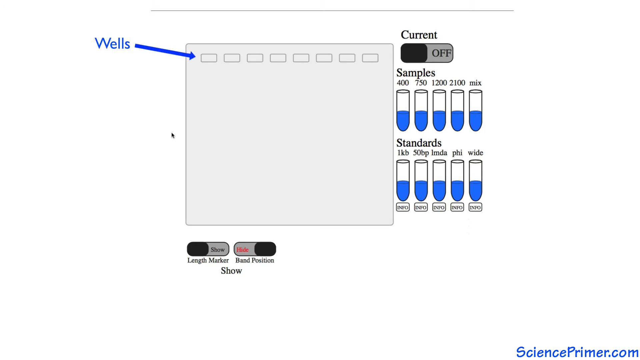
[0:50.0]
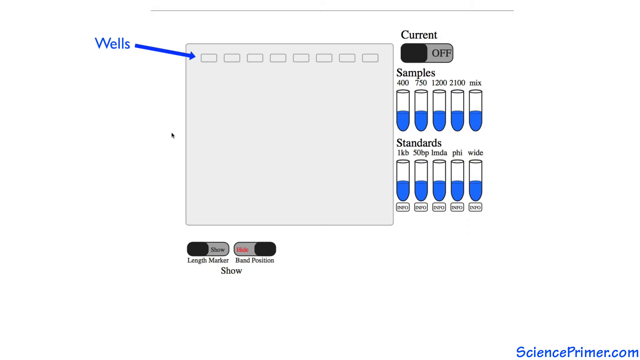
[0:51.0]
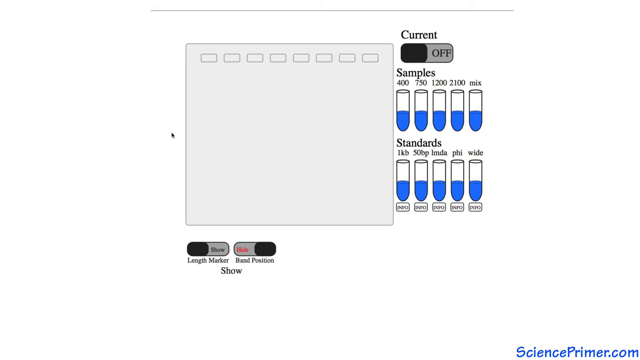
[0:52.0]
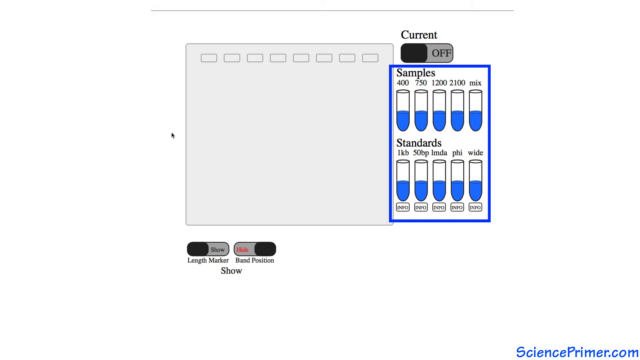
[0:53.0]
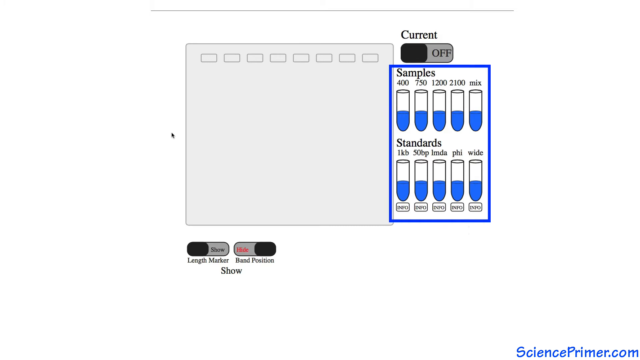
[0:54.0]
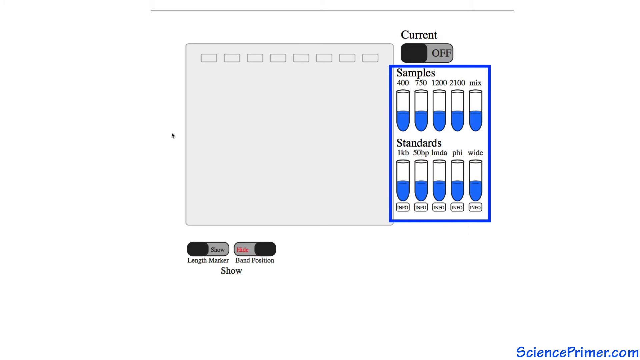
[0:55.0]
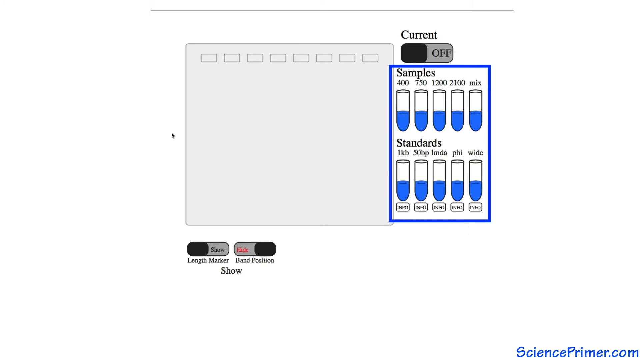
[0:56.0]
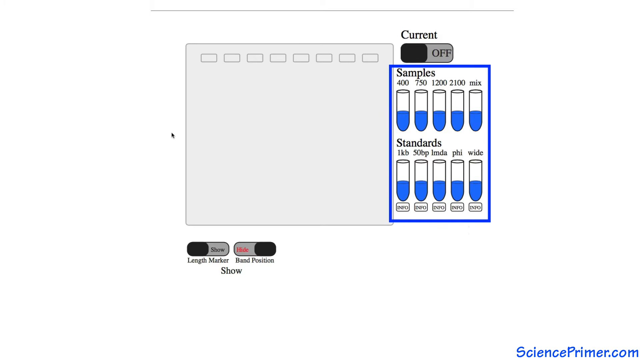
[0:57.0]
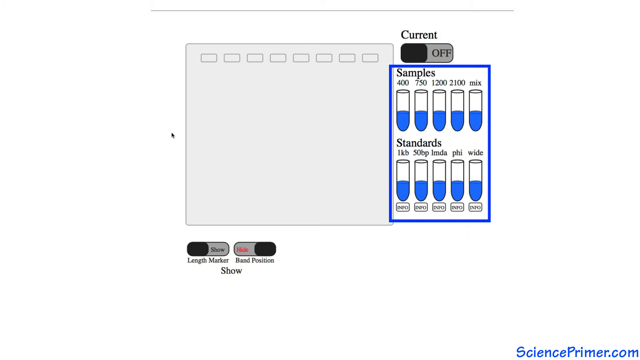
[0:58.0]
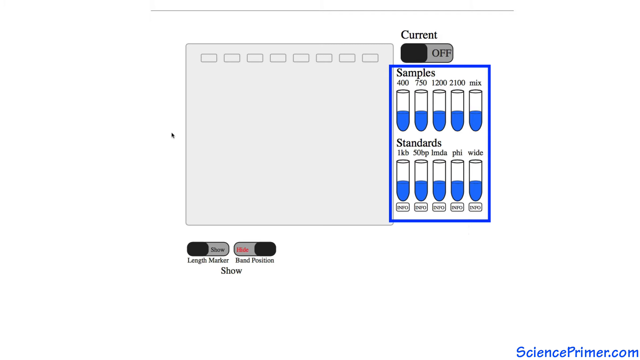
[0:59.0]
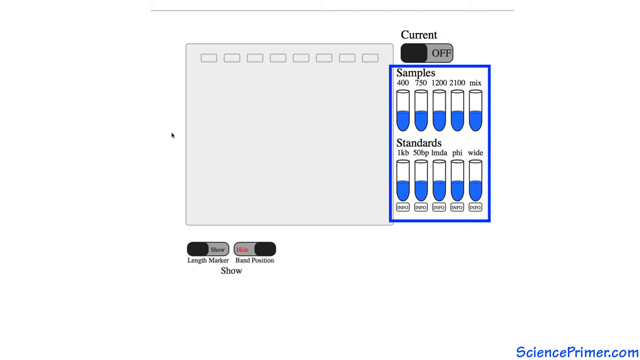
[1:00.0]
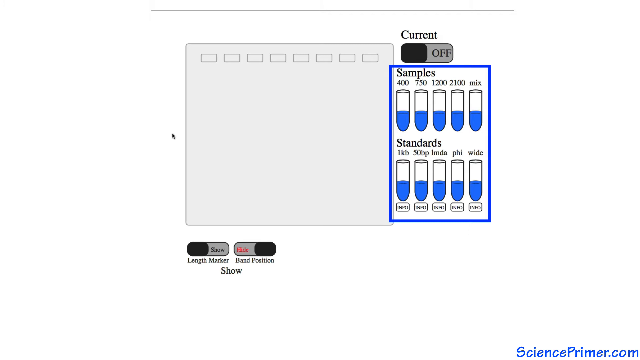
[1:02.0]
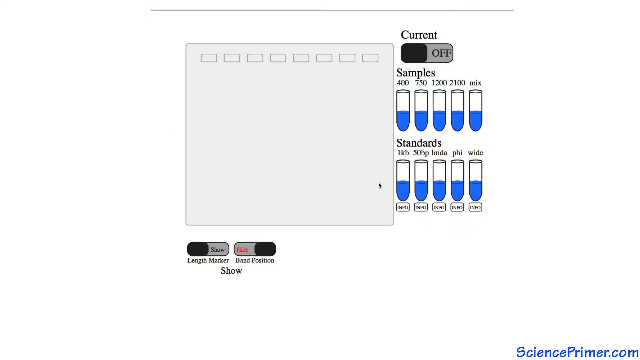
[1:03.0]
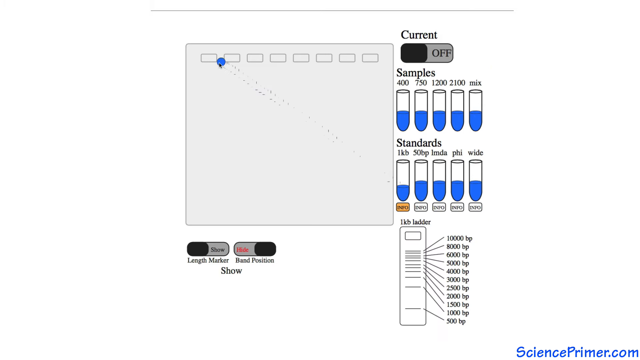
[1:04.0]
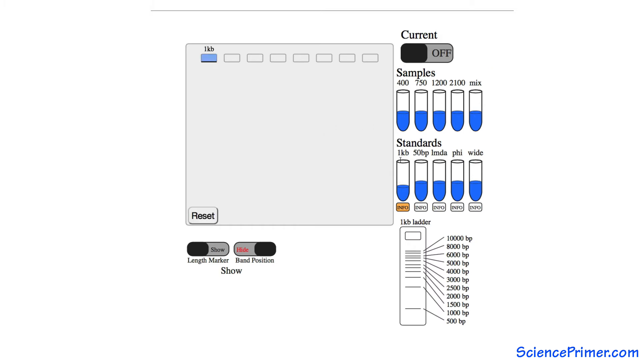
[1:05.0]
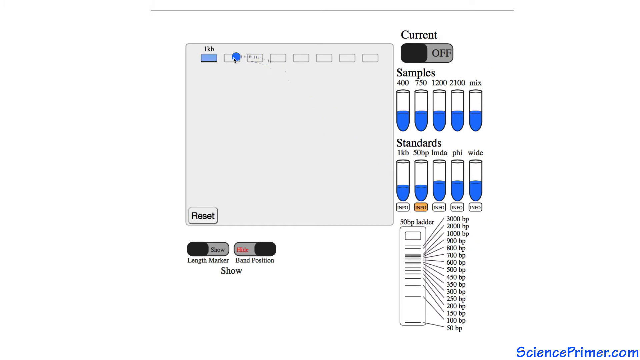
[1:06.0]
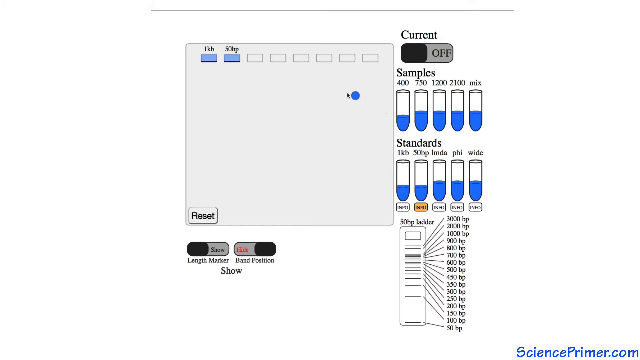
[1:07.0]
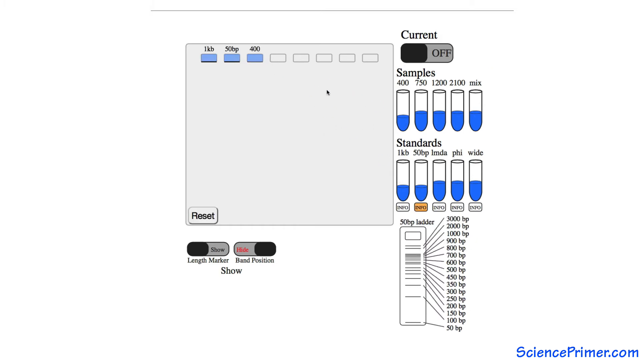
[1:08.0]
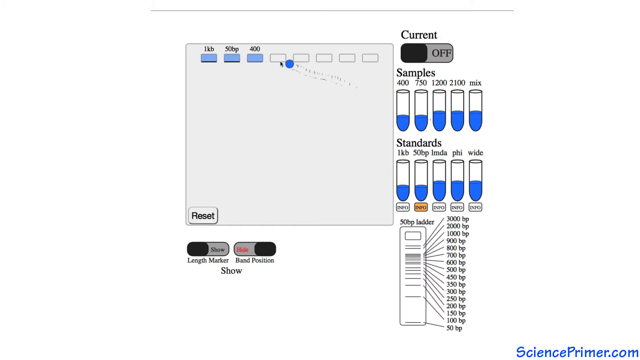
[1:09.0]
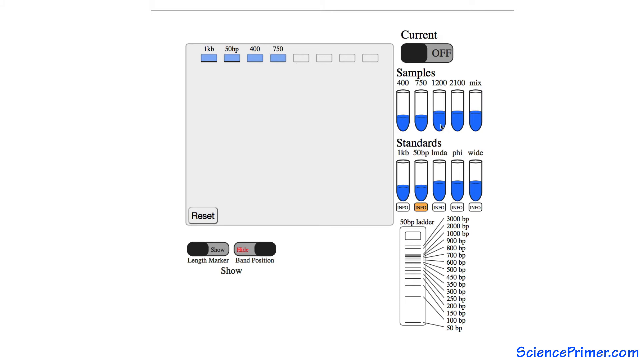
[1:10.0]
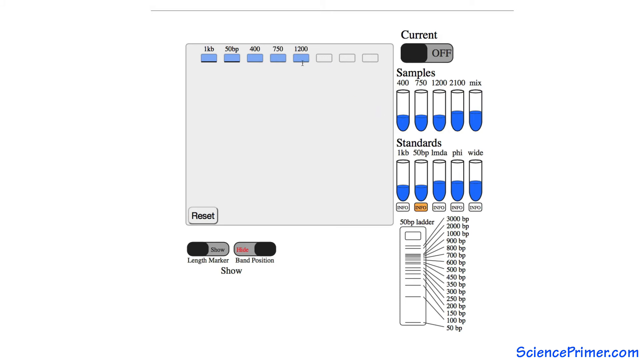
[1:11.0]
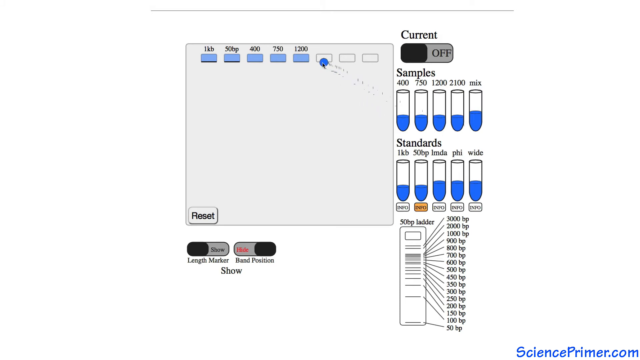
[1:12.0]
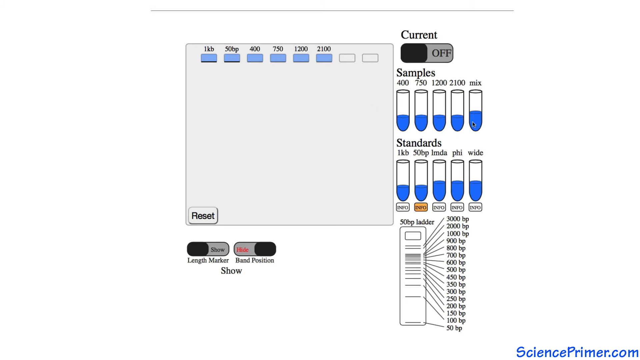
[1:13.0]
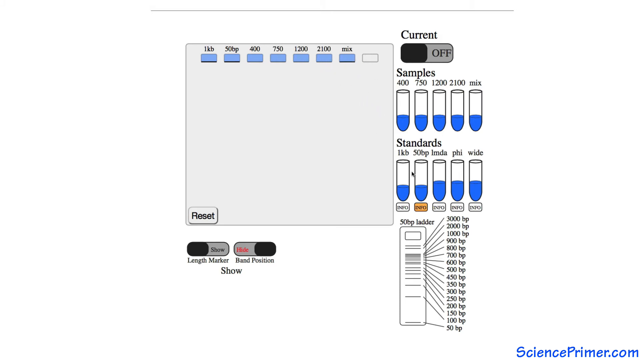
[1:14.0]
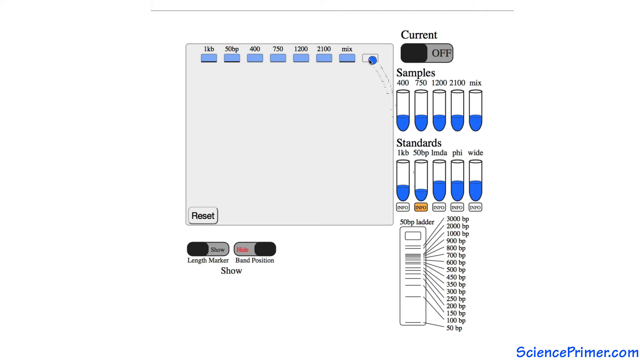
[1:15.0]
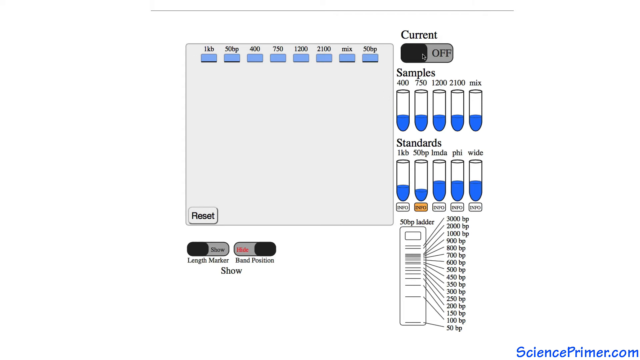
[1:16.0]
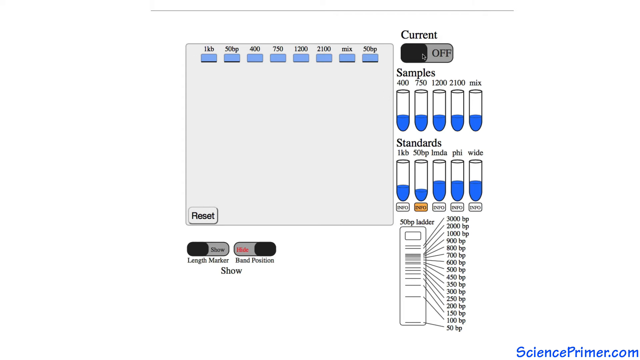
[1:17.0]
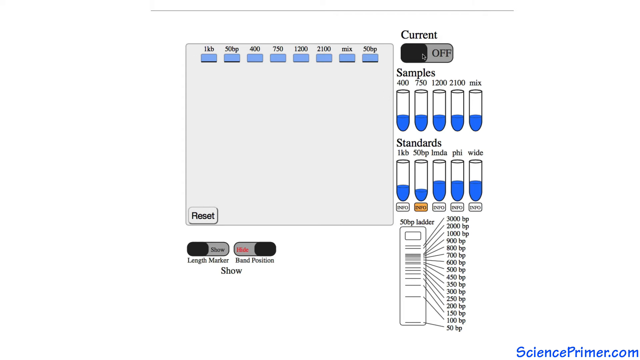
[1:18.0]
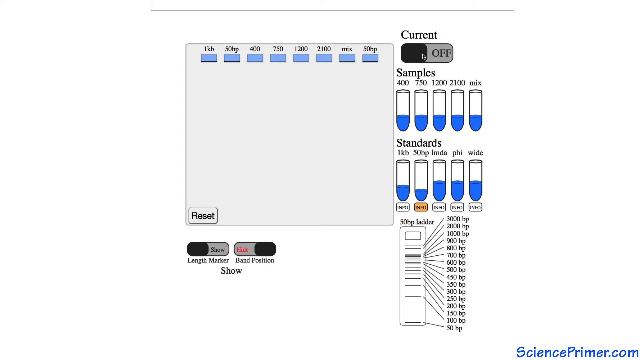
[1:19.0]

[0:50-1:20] A new arrow appears on the left side of the screen, pointing to the smaller rectangles lining the top of the large one, and is labeled "Wells." Underneath the bottom row of test tubes are five rectangles with text inside them. A logo on the bottom right of the screen says "scienceprimer.com." The ten test tubes, labeled samples and standards, are highlighted in a large blue rectangle. The top row of test tubes is labeled with different numbers, and the last one is labeled "mix." A mouse cursor appears and starts dragging the liquid from the bottom row of test tubes into the wells. When liquid is dragged into a well, the amount poured in is shown above it. A Reset button appears at the bottom of the gray rectangle.